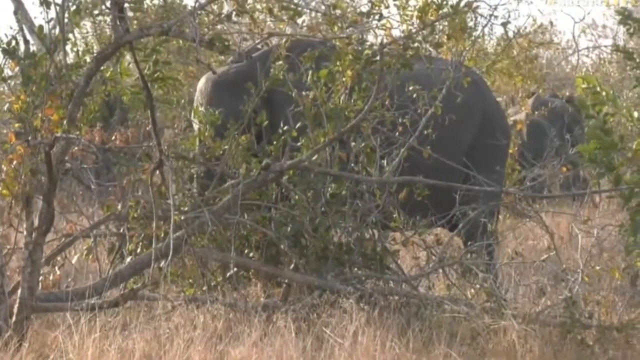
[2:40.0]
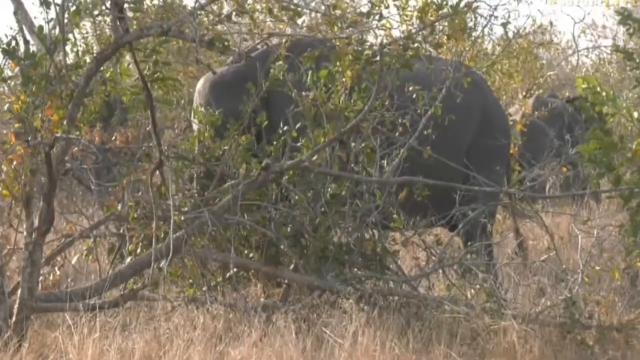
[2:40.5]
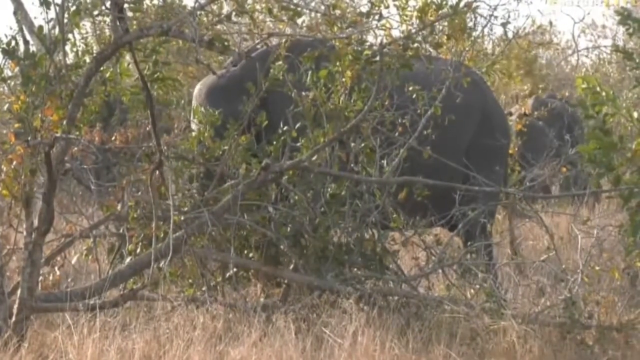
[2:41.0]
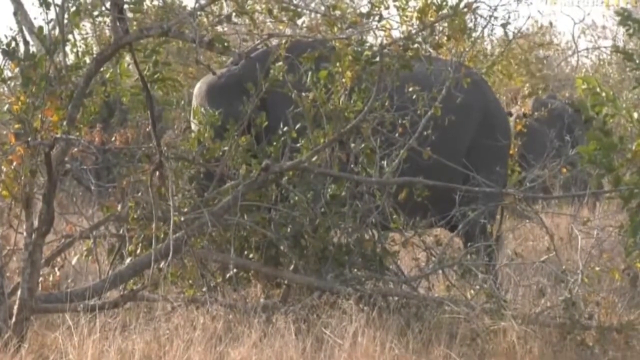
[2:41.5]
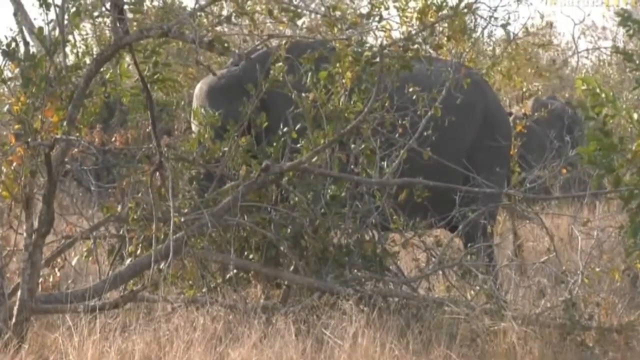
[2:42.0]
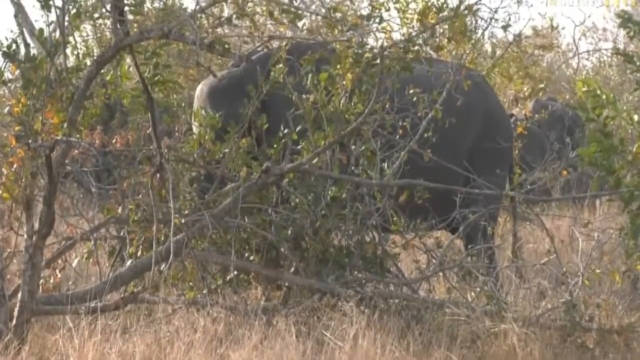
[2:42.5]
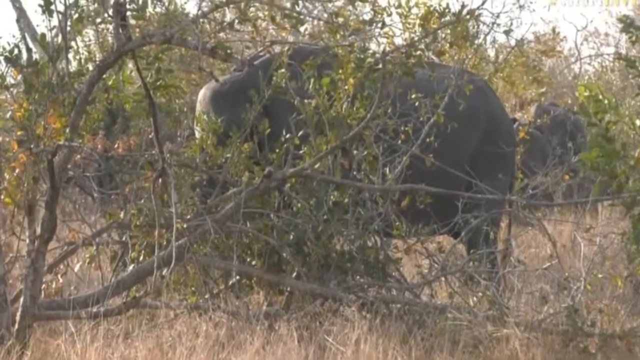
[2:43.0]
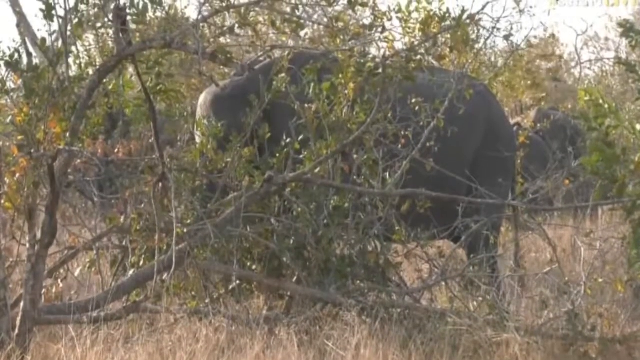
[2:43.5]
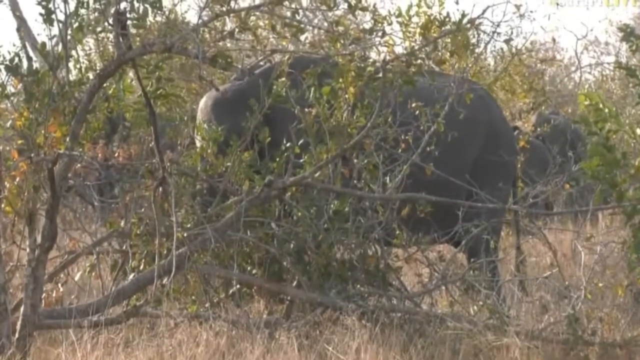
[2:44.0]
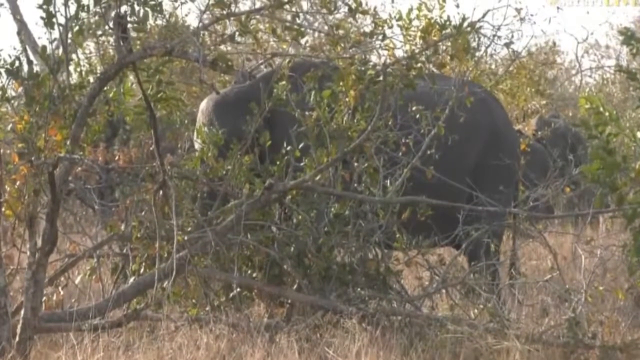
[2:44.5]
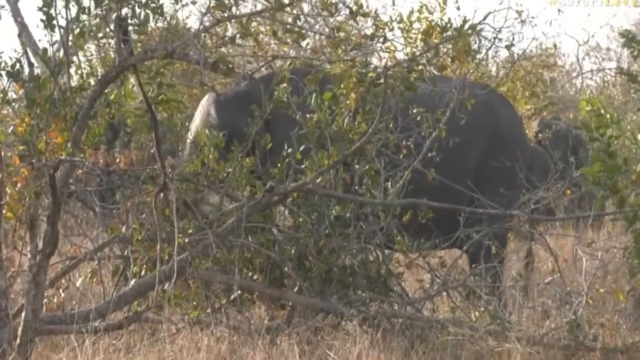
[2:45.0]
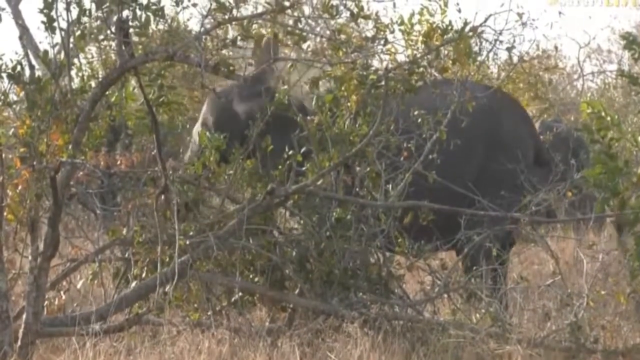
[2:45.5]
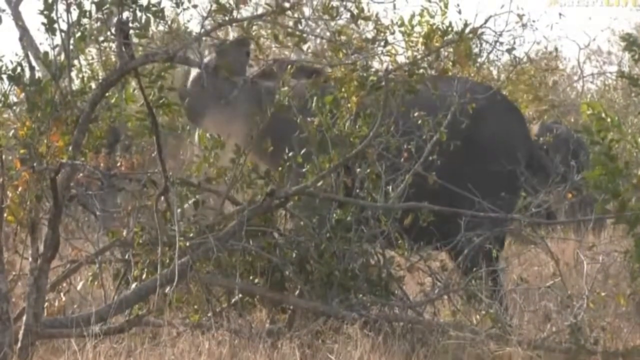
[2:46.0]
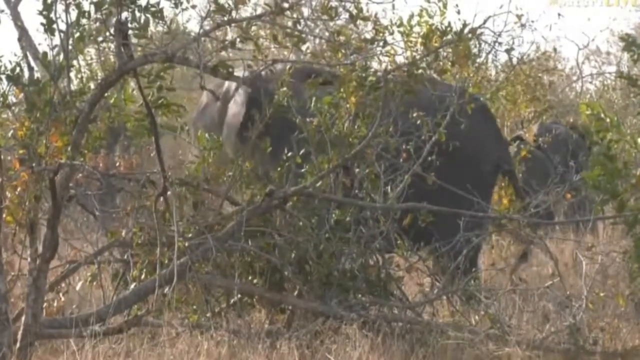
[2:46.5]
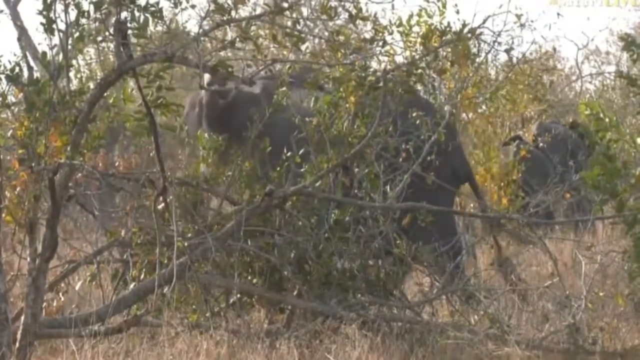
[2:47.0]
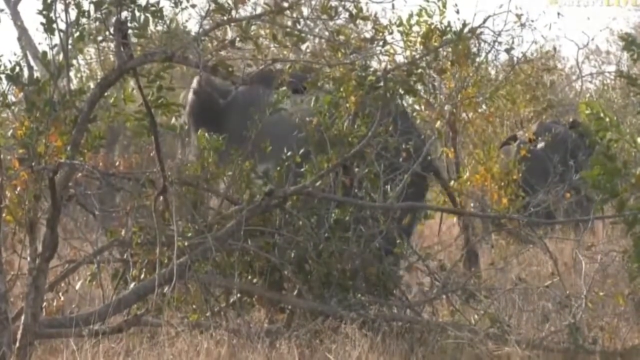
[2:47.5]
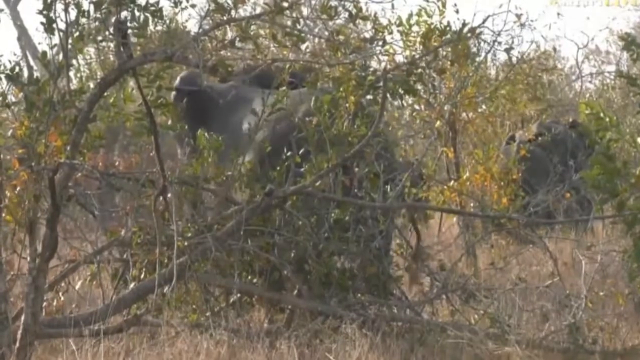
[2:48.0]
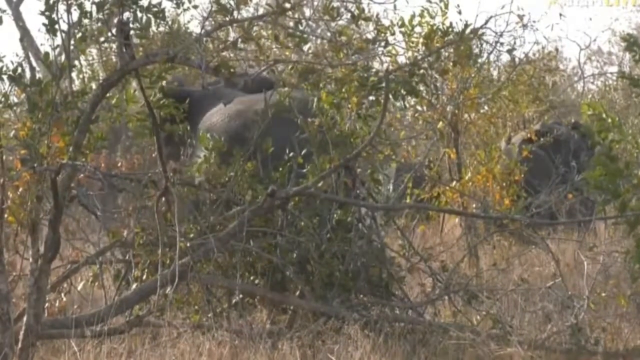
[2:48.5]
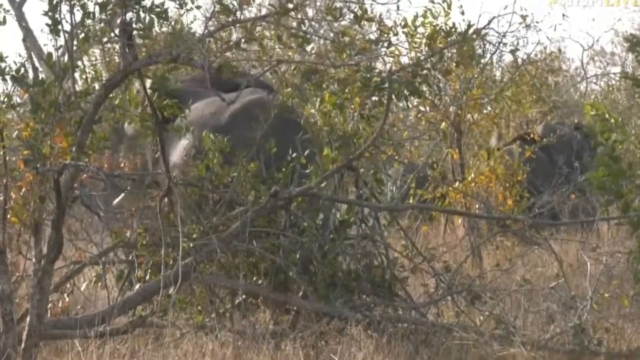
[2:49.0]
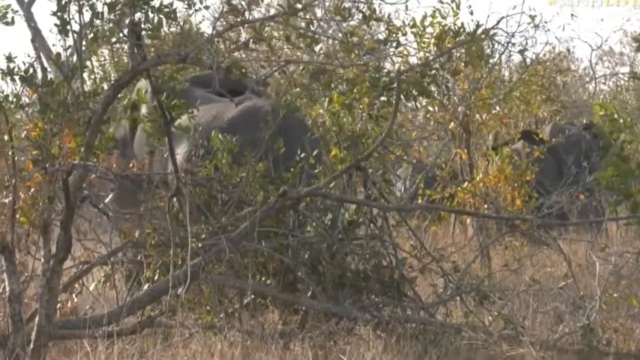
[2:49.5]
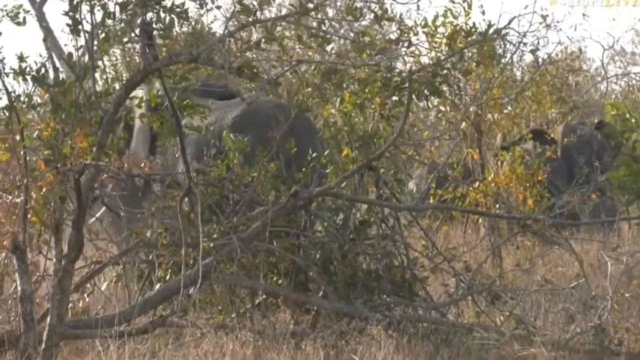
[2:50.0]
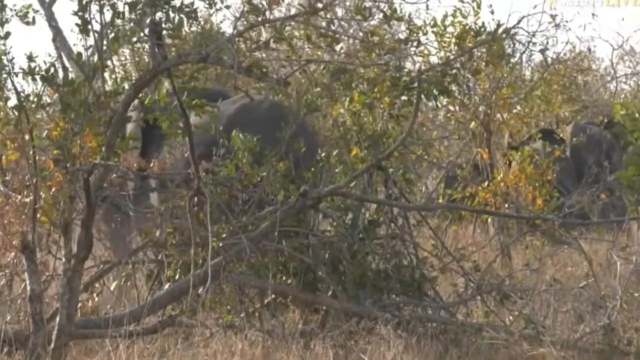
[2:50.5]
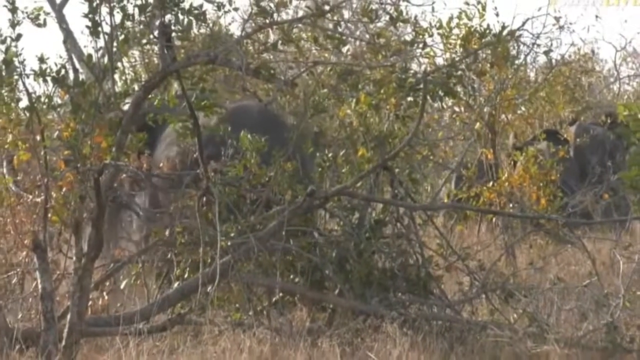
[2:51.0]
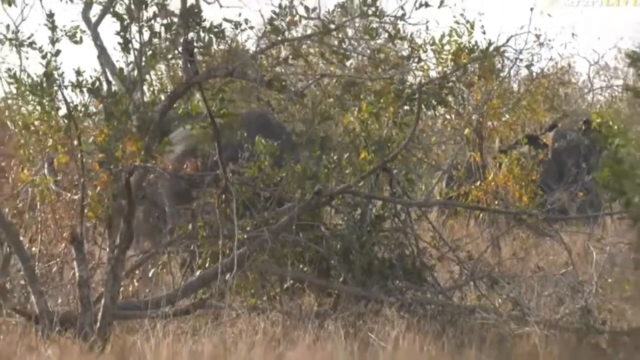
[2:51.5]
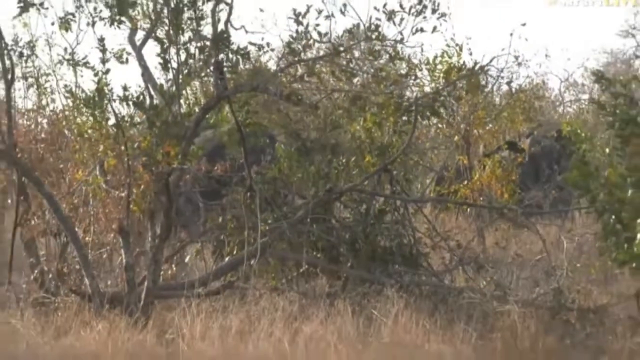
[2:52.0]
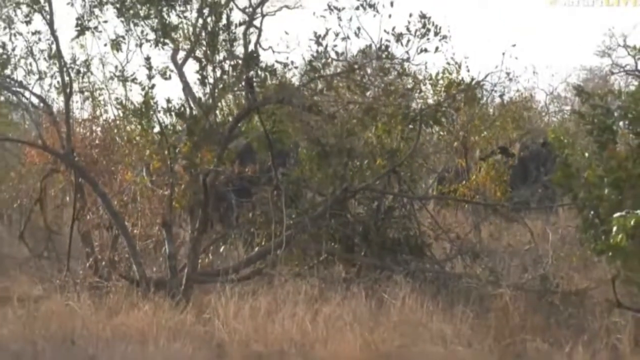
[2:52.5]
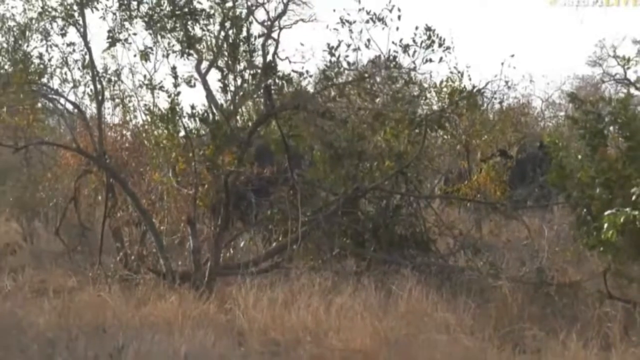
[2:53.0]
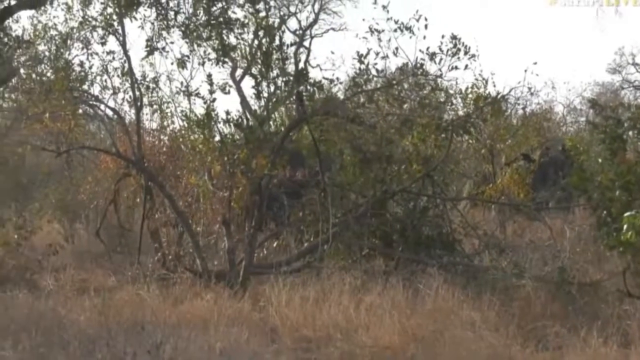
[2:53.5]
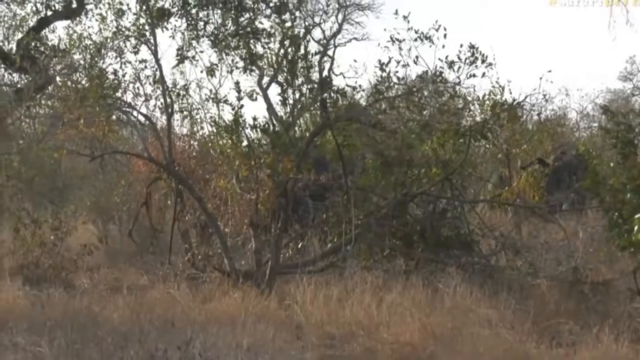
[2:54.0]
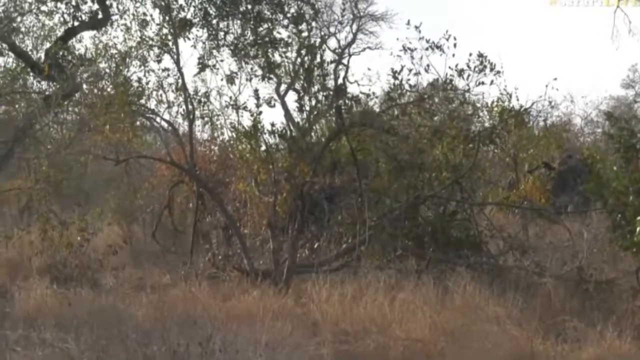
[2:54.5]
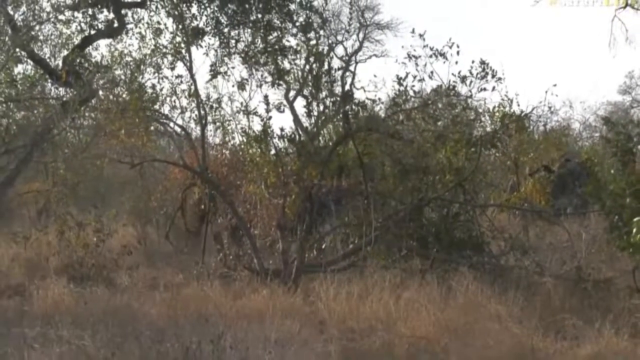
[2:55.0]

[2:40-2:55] The elephants graze. In the distance on the right-hand side, one elephant is at a tree that moves a little; it is unclear whether the elephant is just walking past or the tree has food on it. Another elephant is with that elephant by the vegetation, and they seem to have found something of interest there. The elephant mainly shown in front of the camera shakes its head, its ears going up in the air with a little dust, then turns to walk in a different direction and is seen from the rear. The camera pans back a bit to get all the elephants in one big shot, showing the family in the distance, still together.